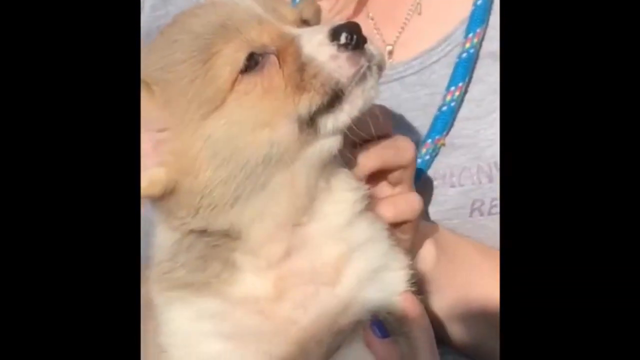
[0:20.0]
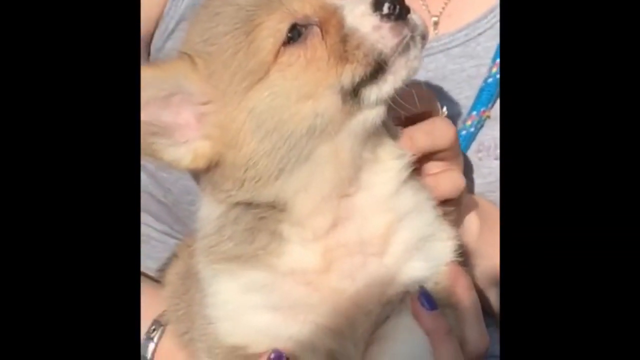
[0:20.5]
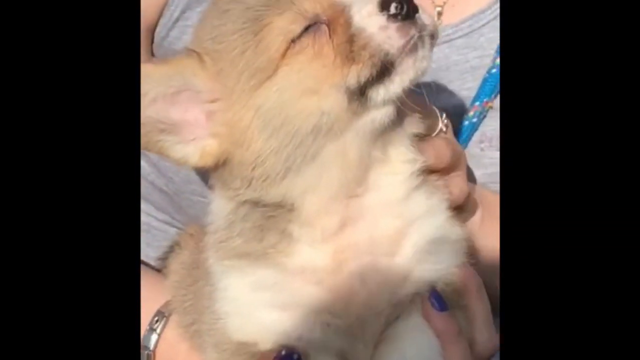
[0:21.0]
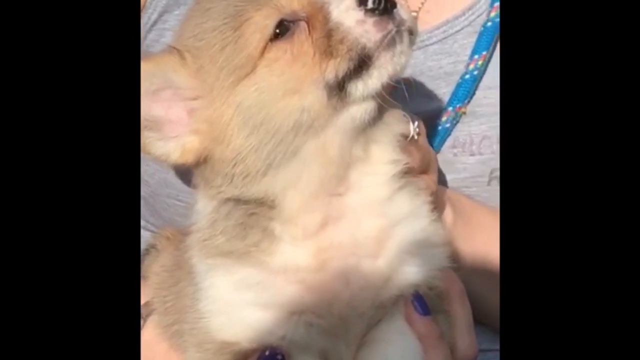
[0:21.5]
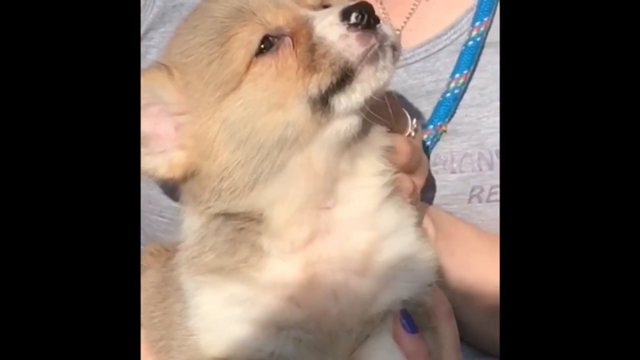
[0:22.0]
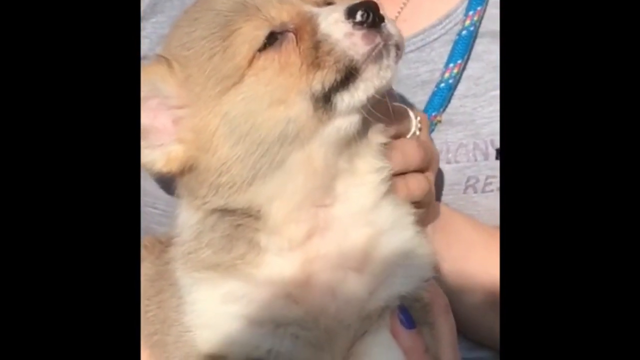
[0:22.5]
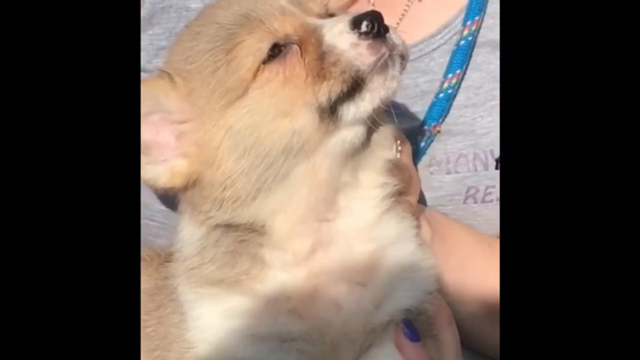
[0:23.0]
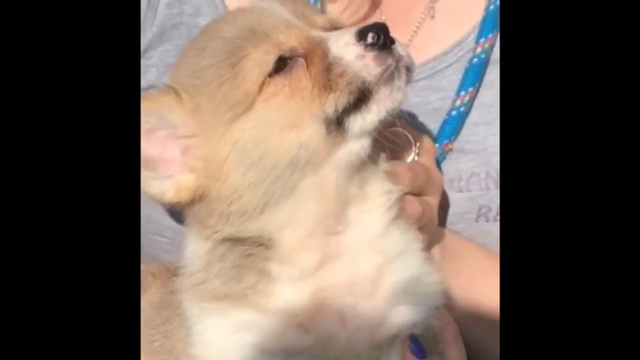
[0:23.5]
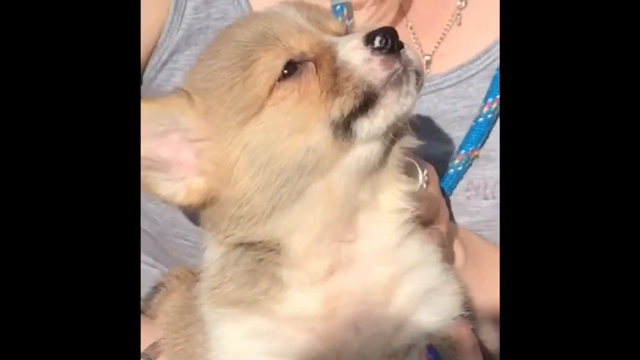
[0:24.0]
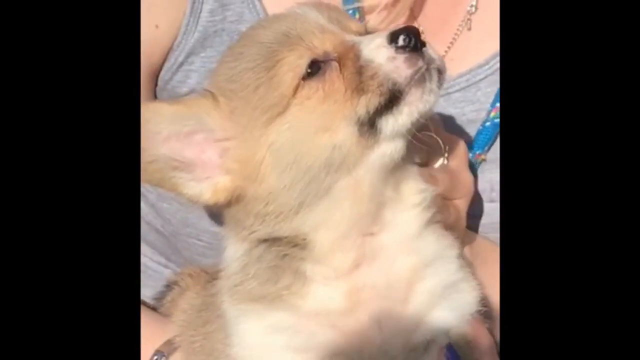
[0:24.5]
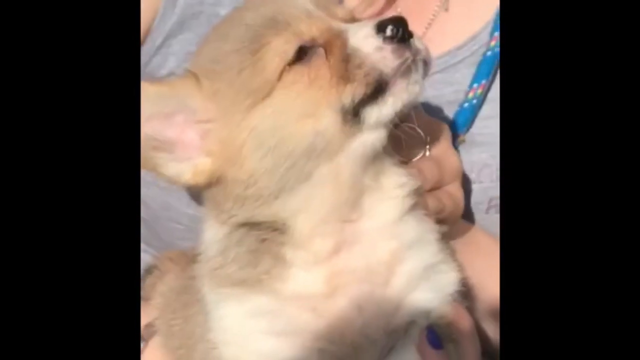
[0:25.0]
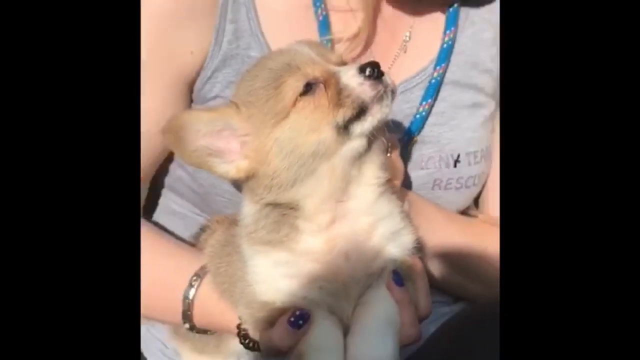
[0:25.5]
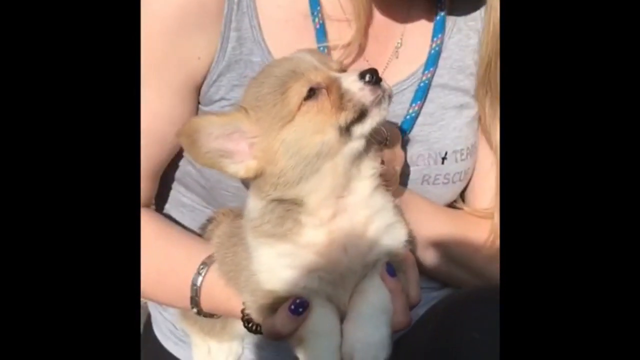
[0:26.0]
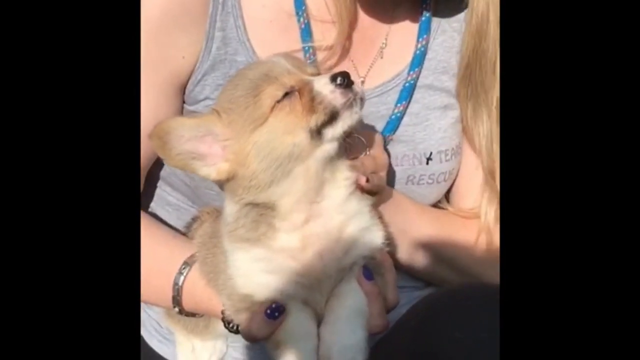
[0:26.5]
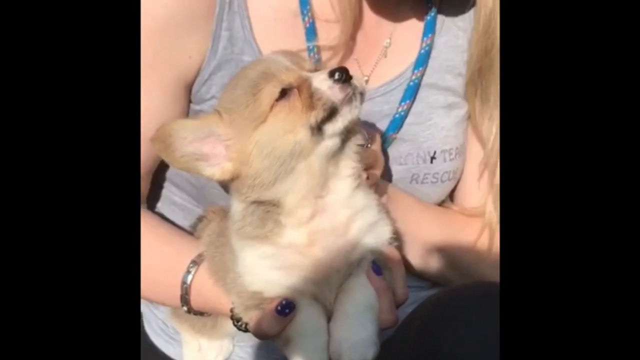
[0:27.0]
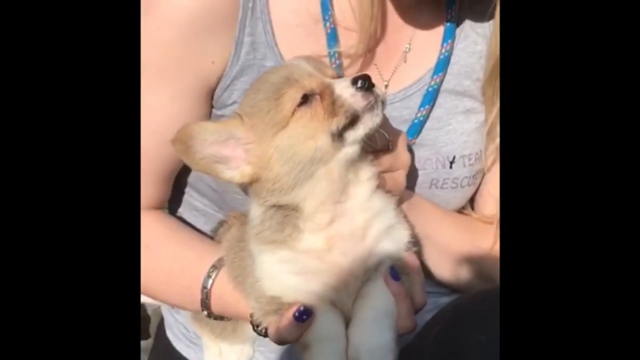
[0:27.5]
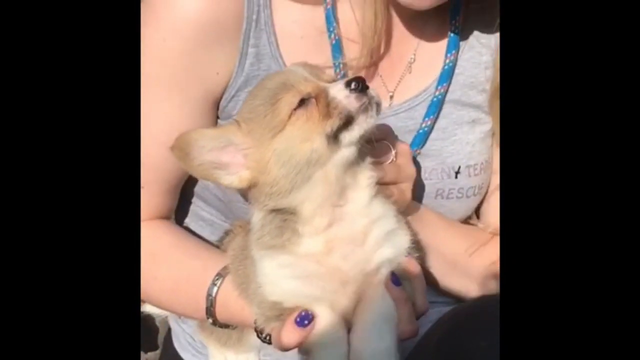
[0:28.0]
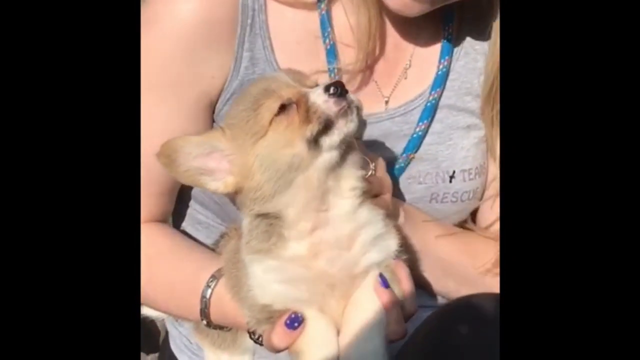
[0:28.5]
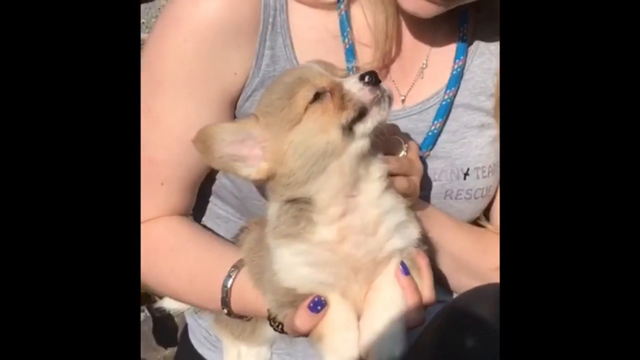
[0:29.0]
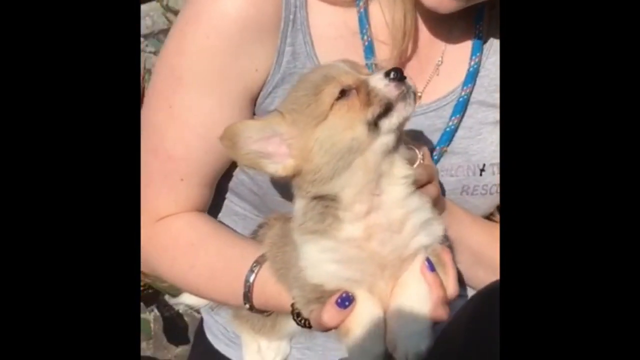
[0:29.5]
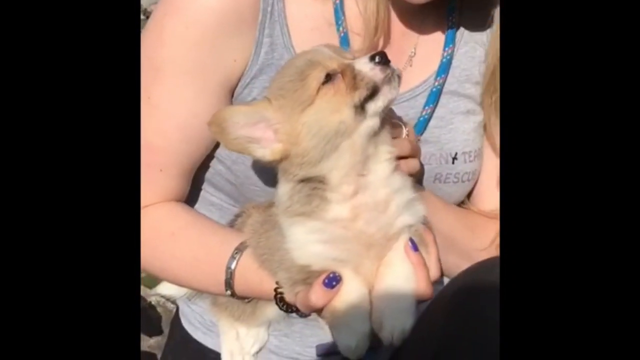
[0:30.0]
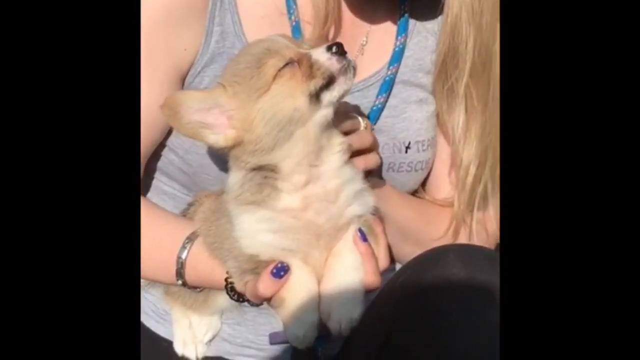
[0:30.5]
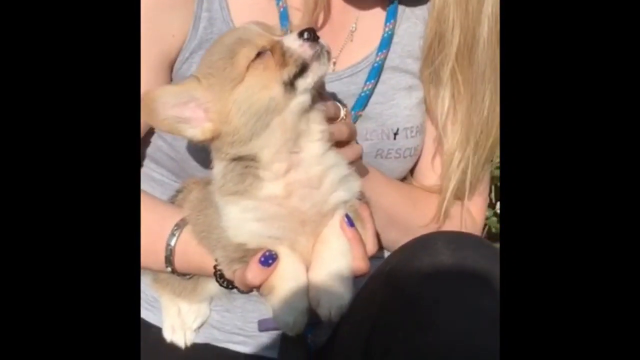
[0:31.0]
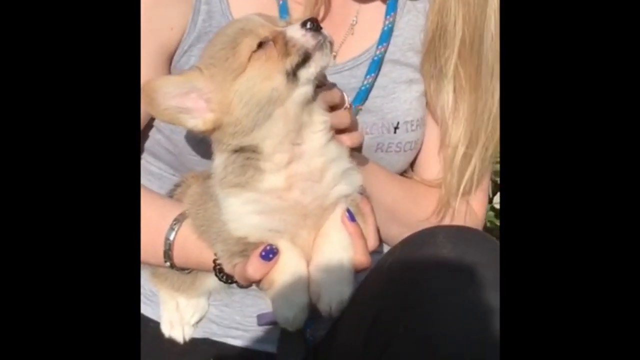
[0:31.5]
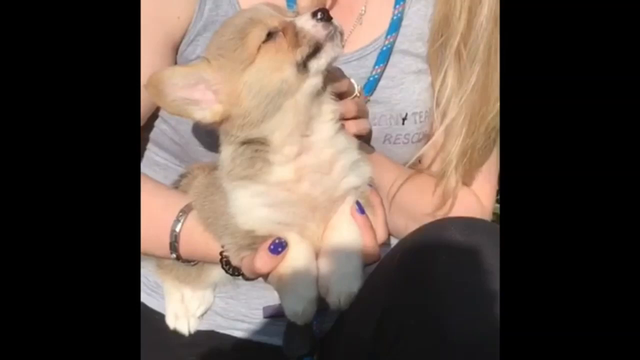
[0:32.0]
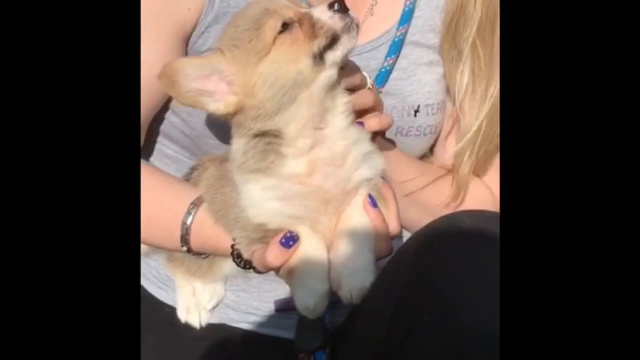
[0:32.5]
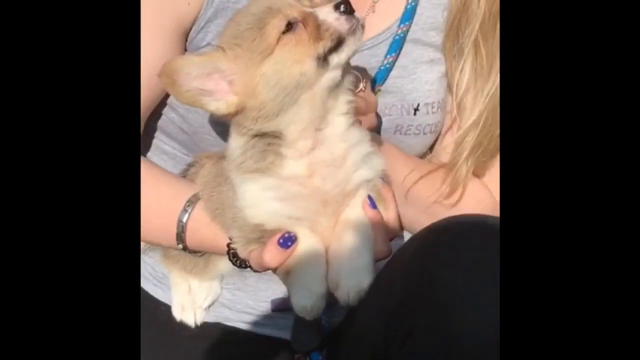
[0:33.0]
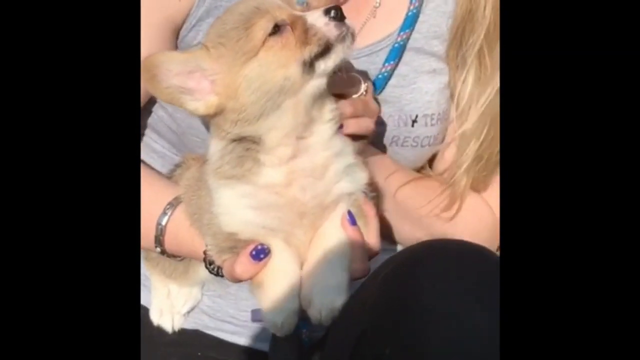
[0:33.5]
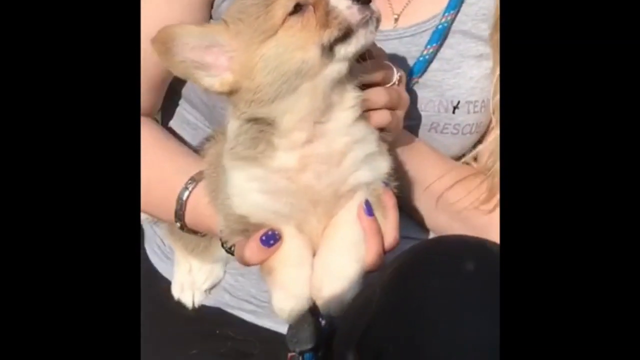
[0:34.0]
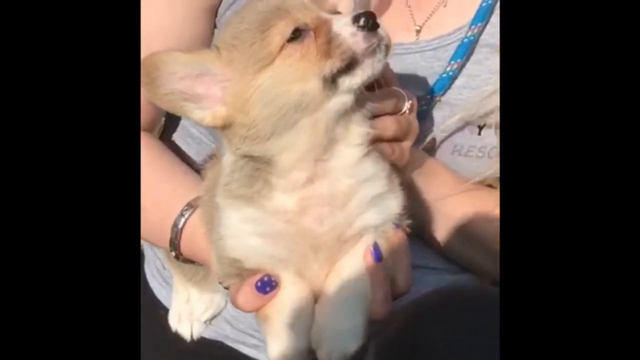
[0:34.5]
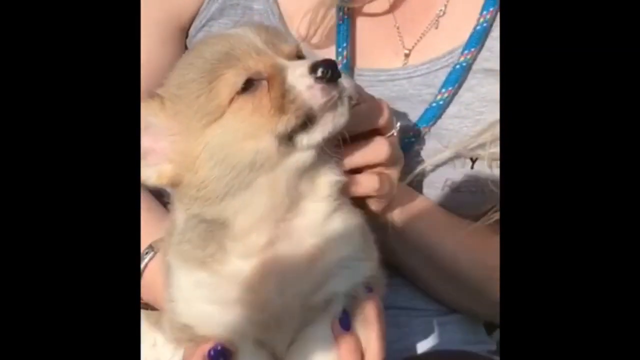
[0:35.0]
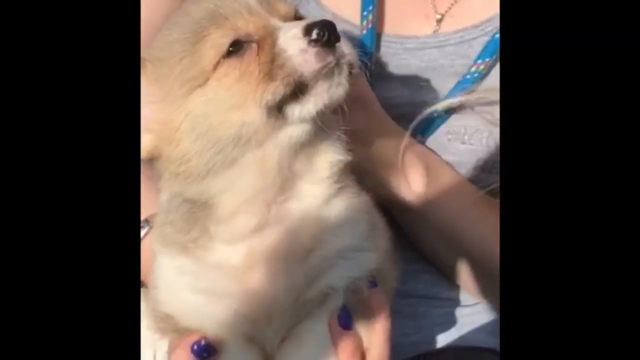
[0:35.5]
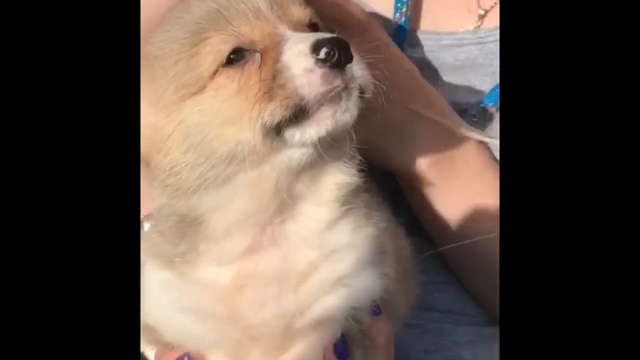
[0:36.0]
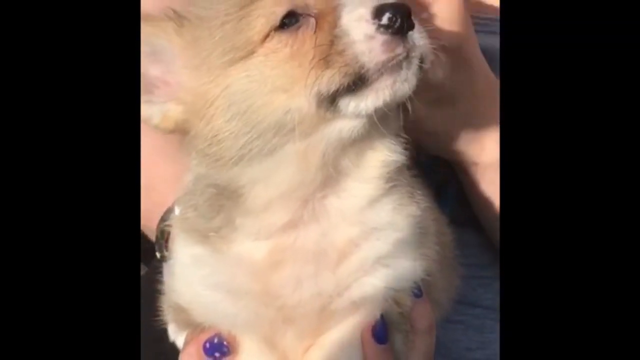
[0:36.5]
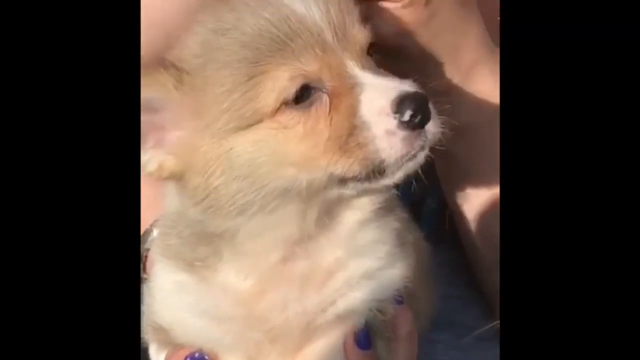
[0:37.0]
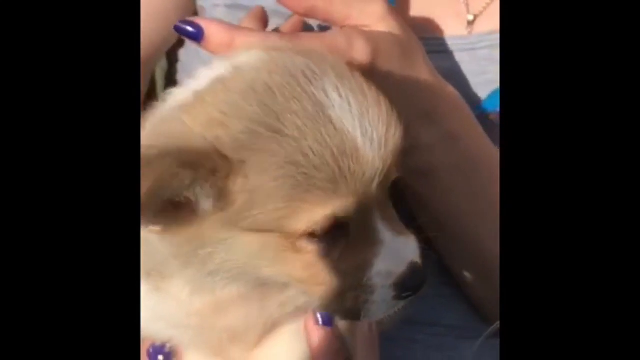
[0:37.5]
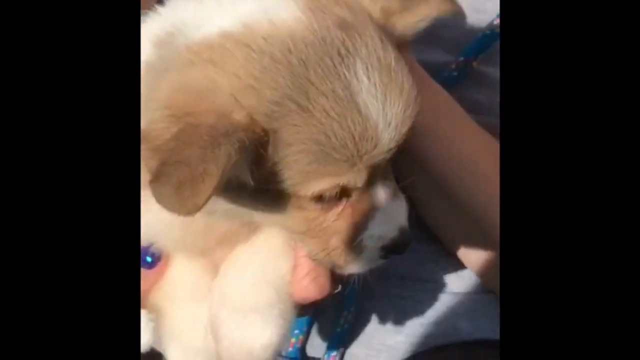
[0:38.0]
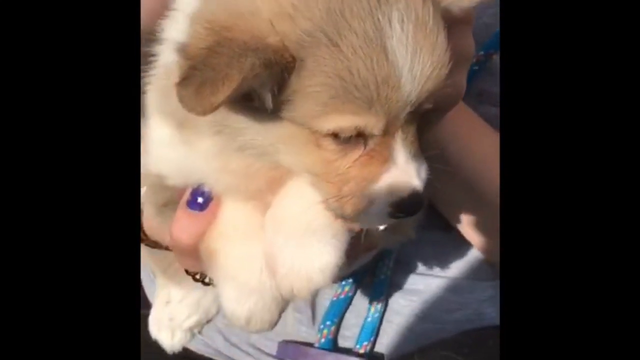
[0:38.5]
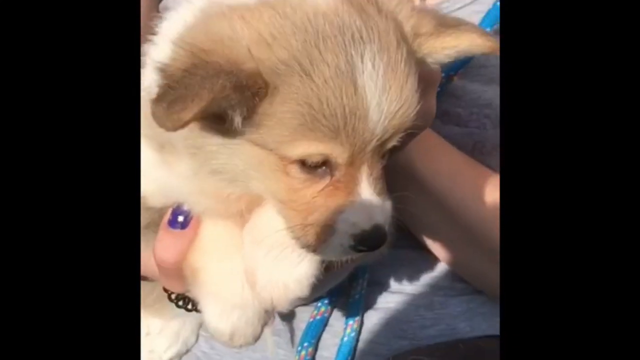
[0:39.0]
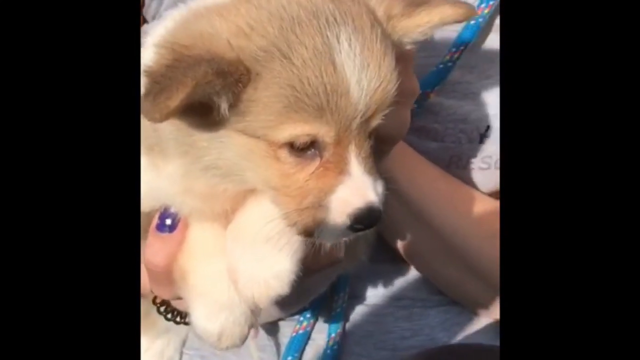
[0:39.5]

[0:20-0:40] The woman keeps tending to the puppy. Something that looks like a leash is on her neck, she wears a ring on her right middle finger, and she has a bracelet on the other wrist. The puppy keeps looking up and then brings its head down, blinking as she tends to it and presses on it. The puppy looks like it is maybe about three months old and looks very distressed. Its coat is brown with cream below, its face is brown, and its snout is black with a touch of white. The puppy blinks a couple of times while looking up. She continues petting and massaging it, brings it down, and keeps petting and tending to it.